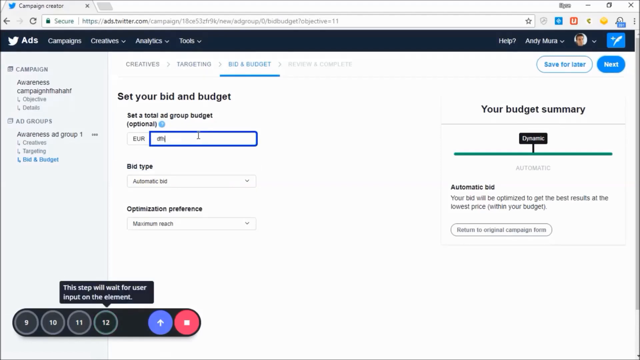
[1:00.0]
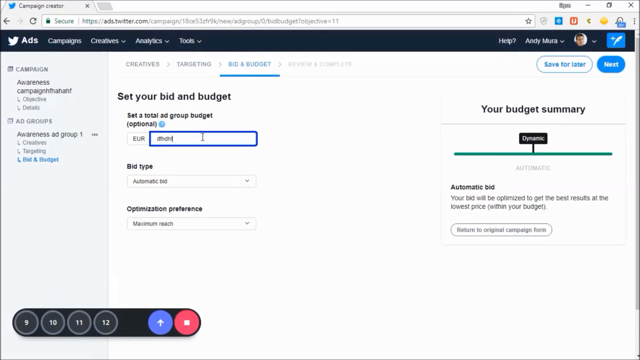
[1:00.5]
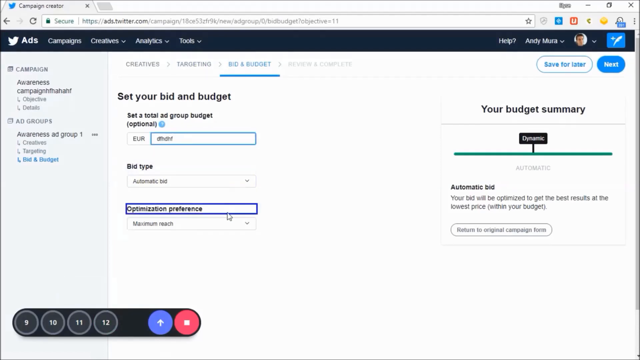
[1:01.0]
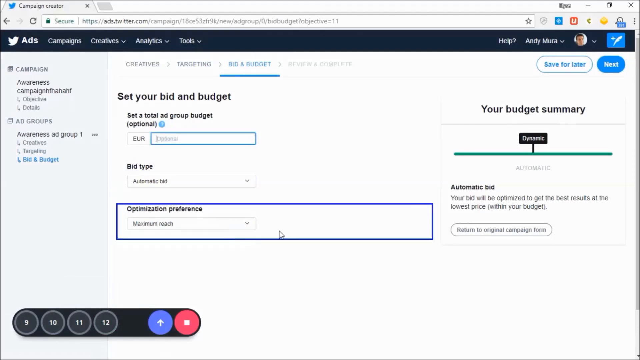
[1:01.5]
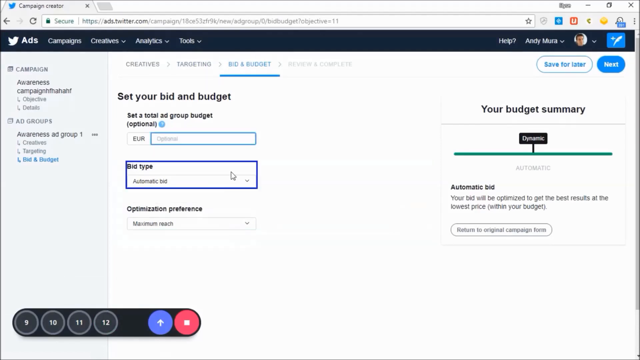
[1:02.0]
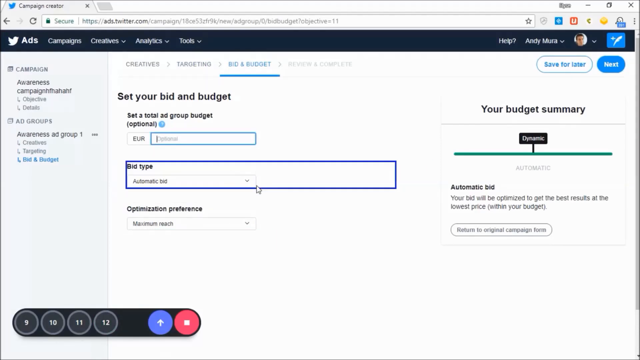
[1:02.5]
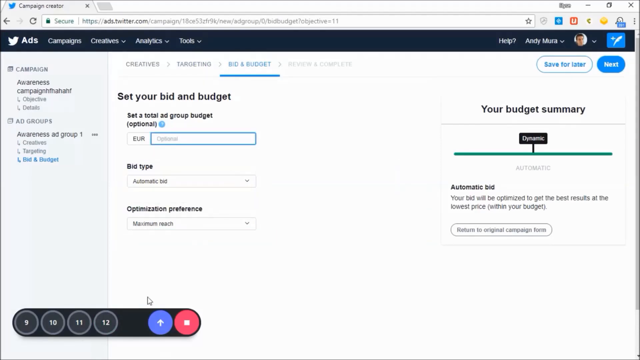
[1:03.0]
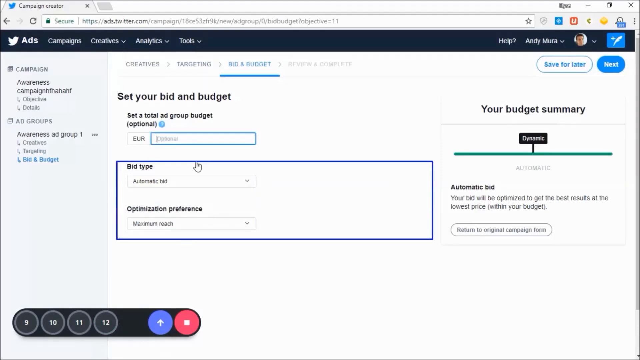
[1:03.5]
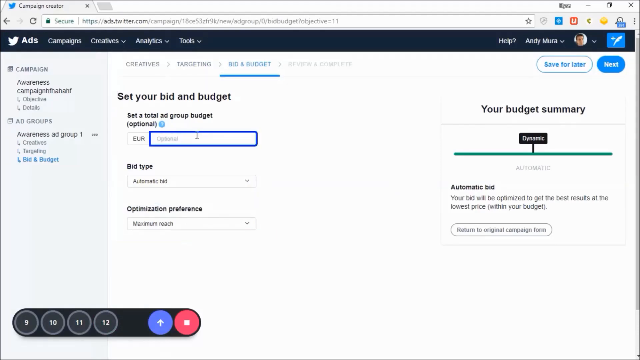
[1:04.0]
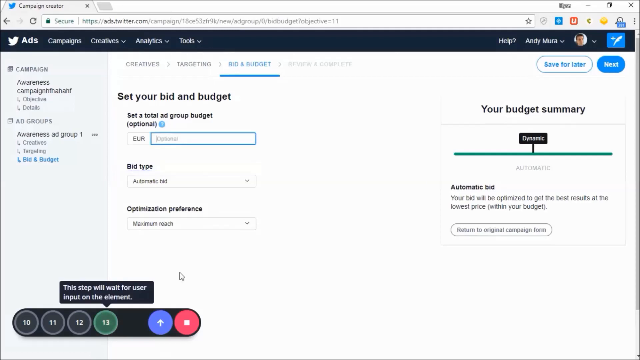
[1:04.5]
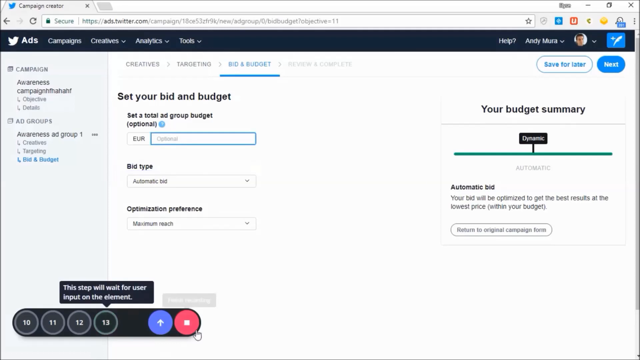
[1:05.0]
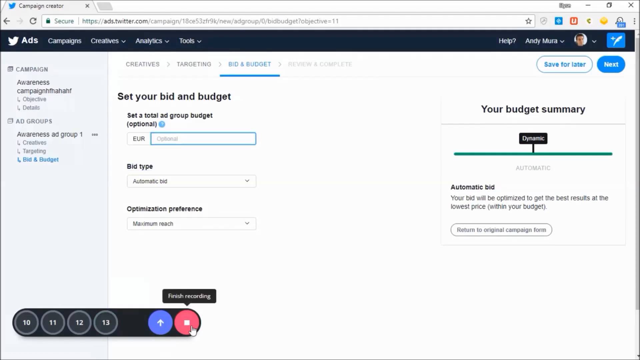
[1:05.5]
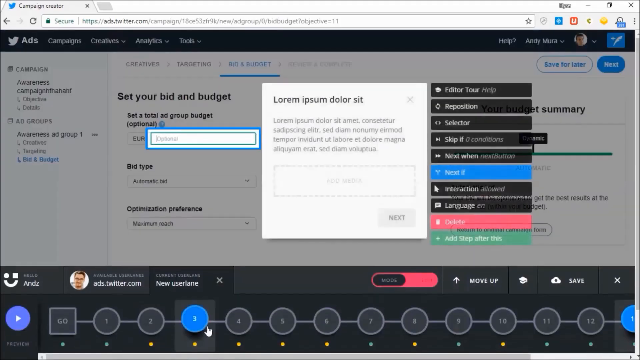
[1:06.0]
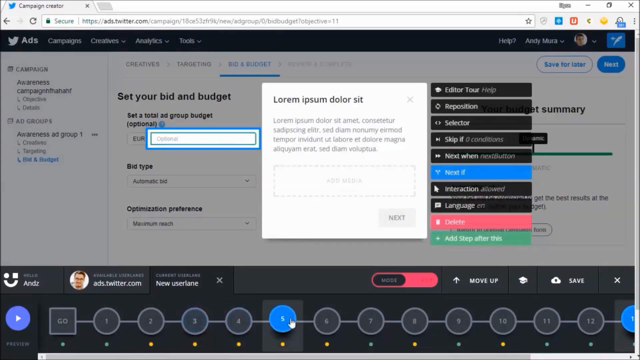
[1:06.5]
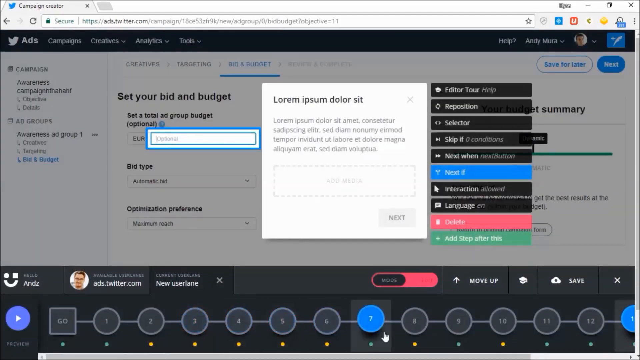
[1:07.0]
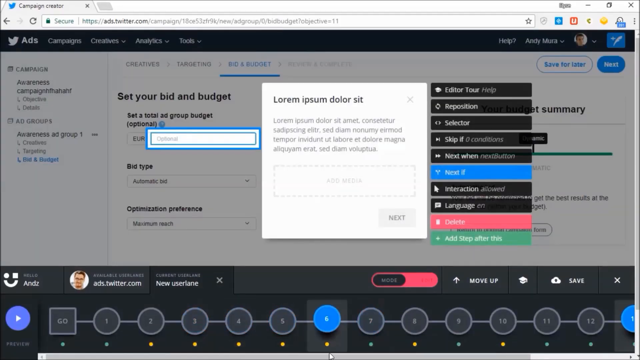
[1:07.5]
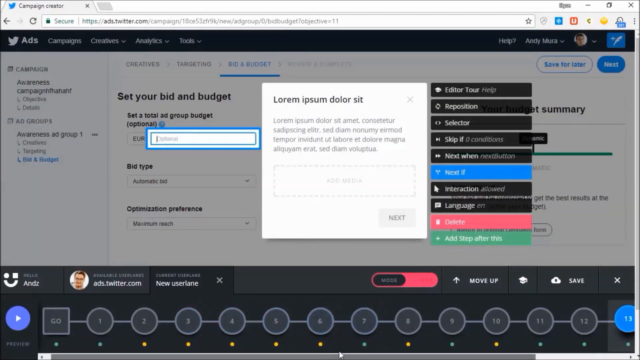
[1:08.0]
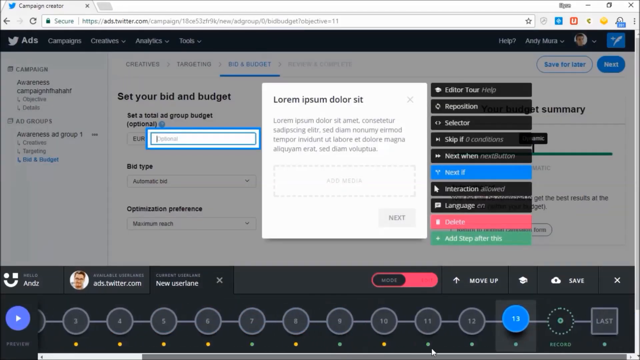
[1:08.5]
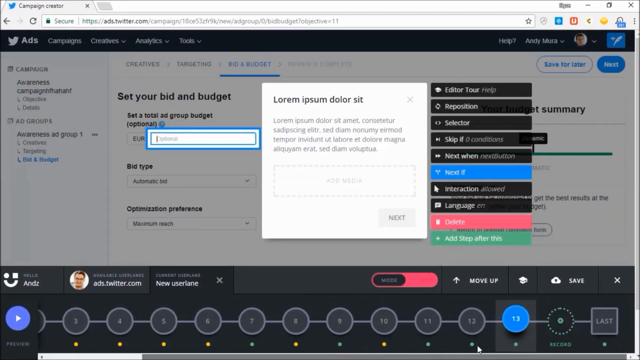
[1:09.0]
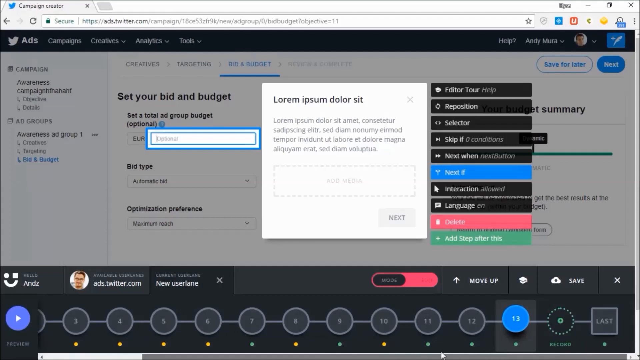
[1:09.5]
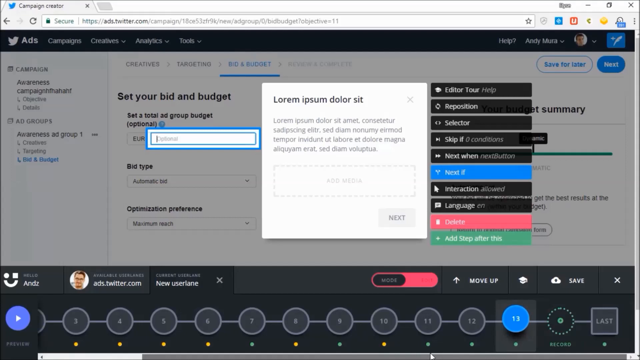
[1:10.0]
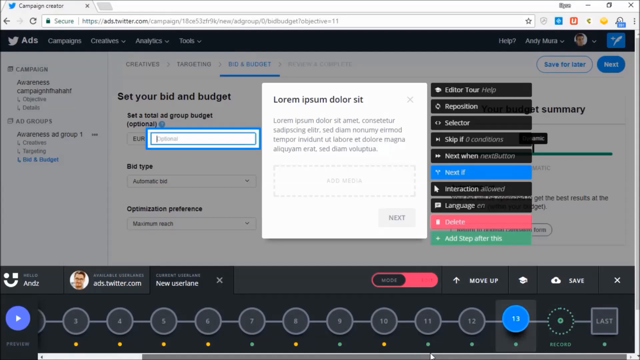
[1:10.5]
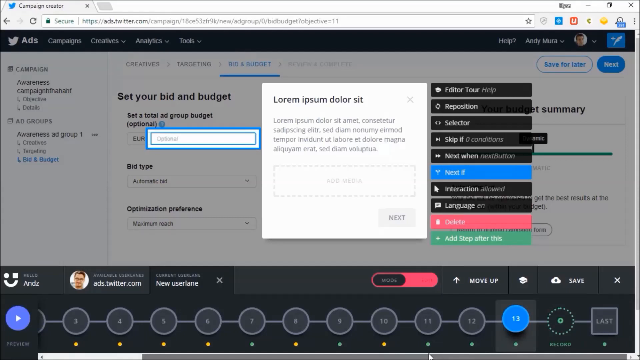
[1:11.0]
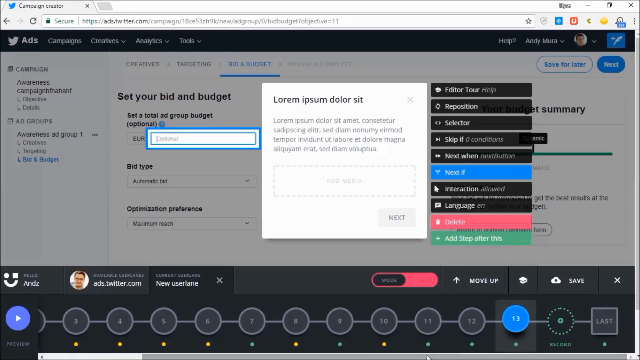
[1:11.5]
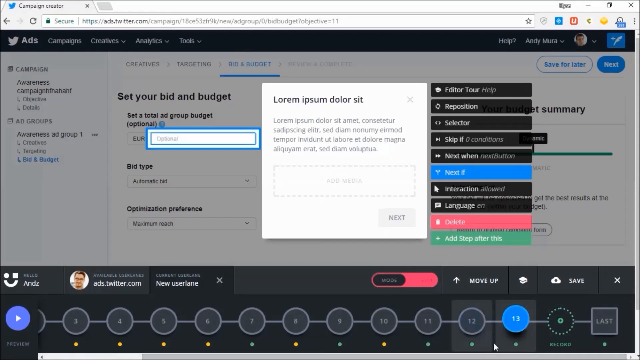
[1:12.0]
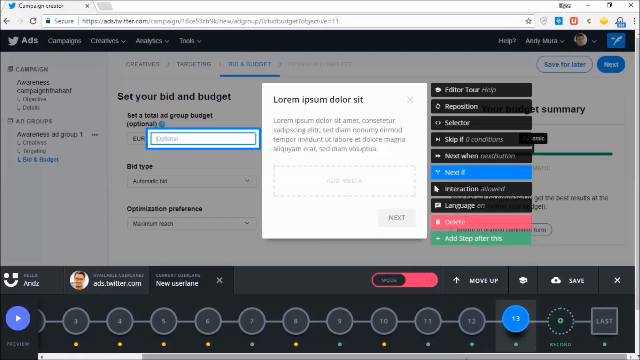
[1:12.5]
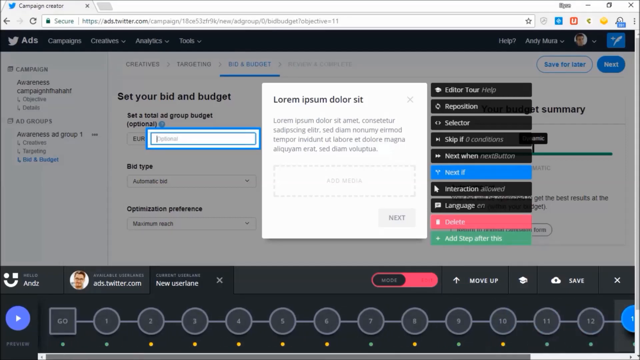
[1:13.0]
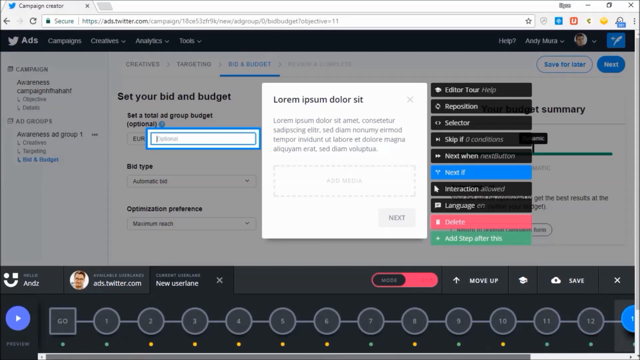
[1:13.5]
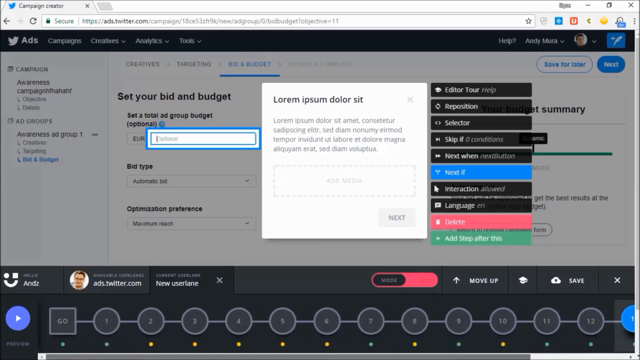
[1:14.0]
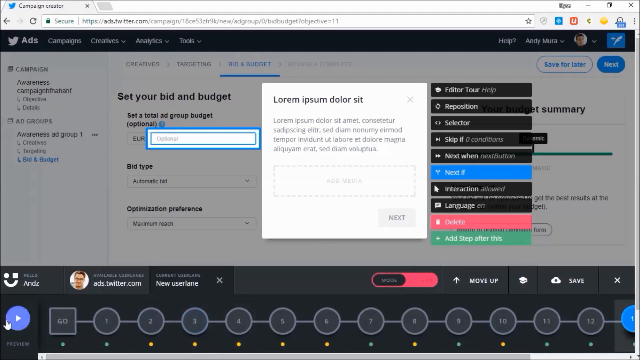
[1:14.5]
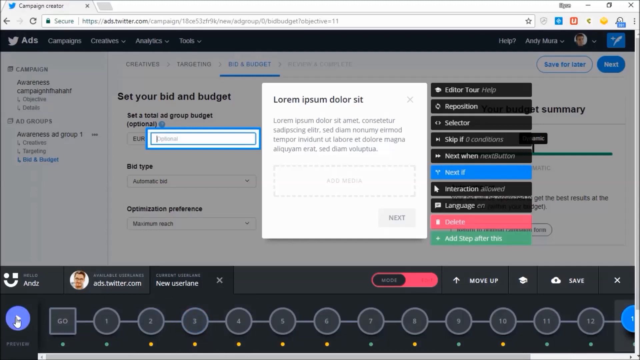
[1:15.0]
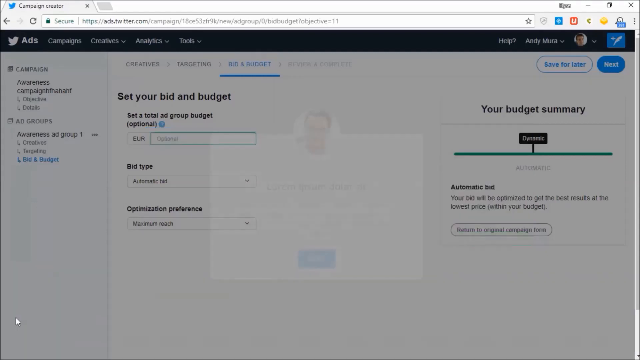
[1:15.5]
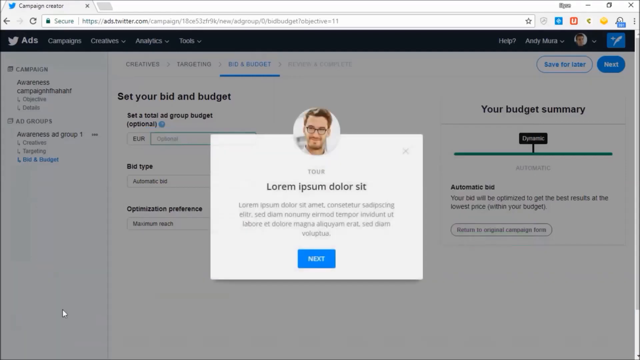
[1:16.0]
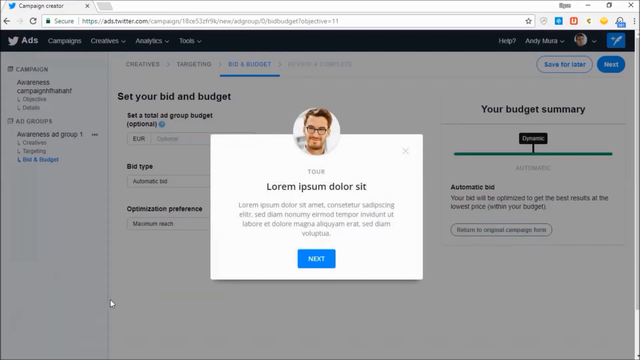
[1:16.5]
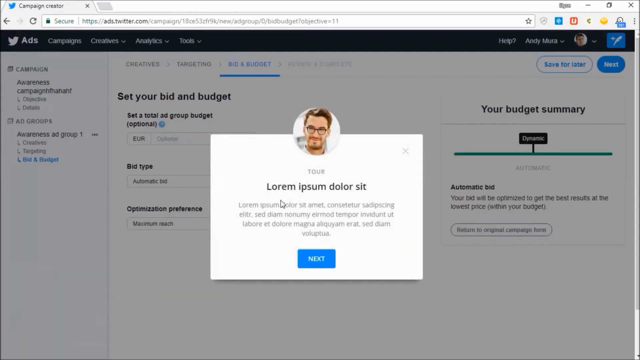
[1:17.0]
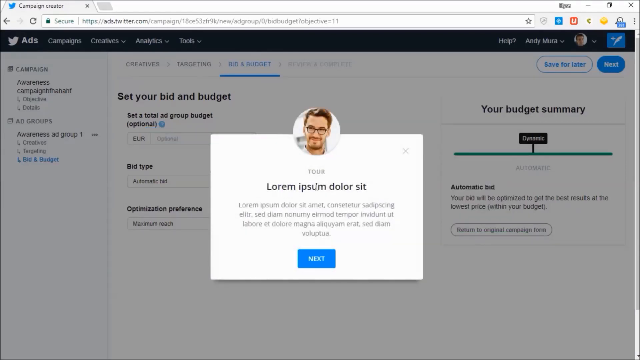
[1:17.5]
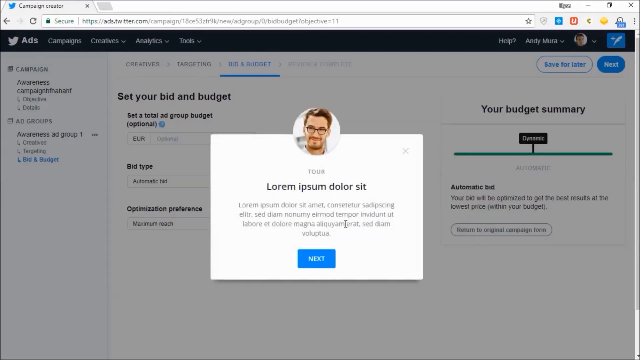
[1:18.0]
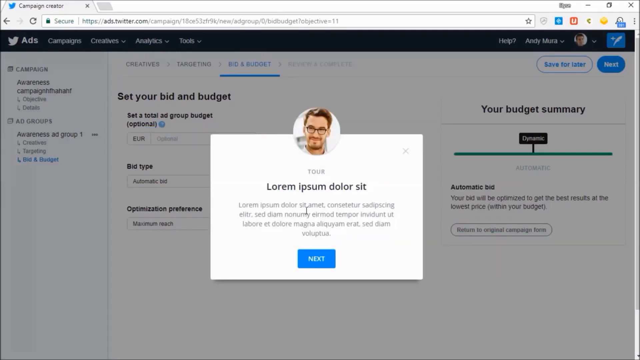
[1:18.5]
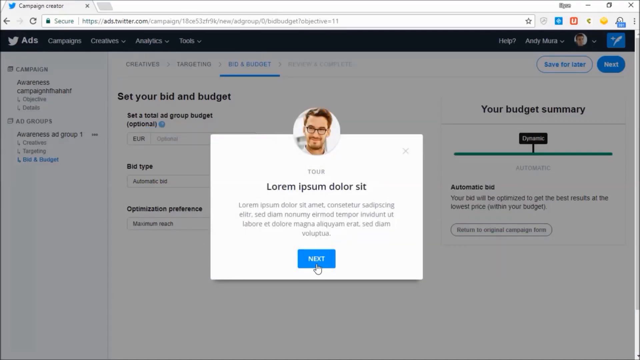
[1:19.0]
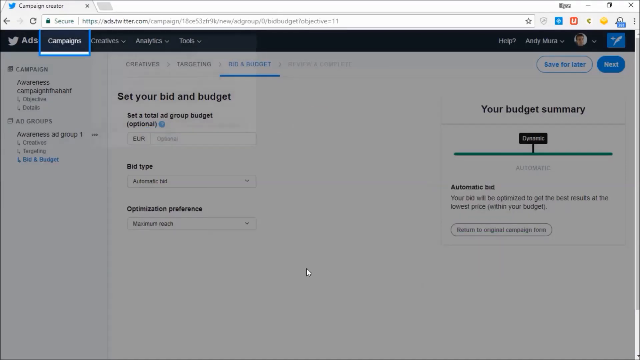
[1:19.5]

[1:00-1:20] The "your budget summary" section is open, and "set your bid and budget" is available. Underneath it says "set a total ad group budget" with "optional" in parentheses underneath, and euros are the denomination. The box is highlighted blue as the person inputs some data. Below that is "bid type" with a drop-down box where "automatic bid" is already selected, and for optimization preference "maximum reach" is selected. In the top right corner it says "Andy Miura" with the person's picture, and there is a help area next to the name. Underneath that it says "save for later", and next to that is a next option. The user highlights various areas of the page, each shown with a blue border, and then moves to a UI section down below that may be recording software controls.